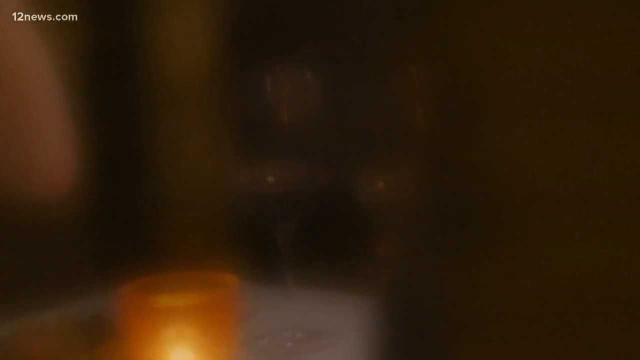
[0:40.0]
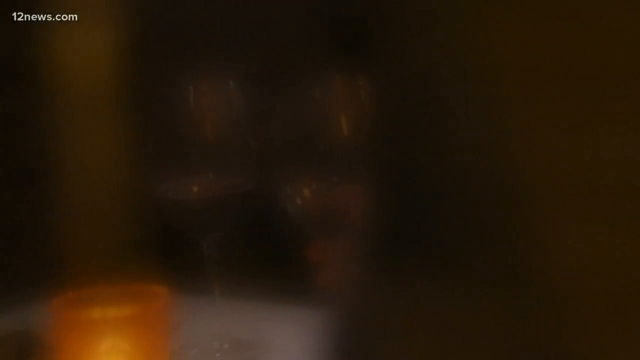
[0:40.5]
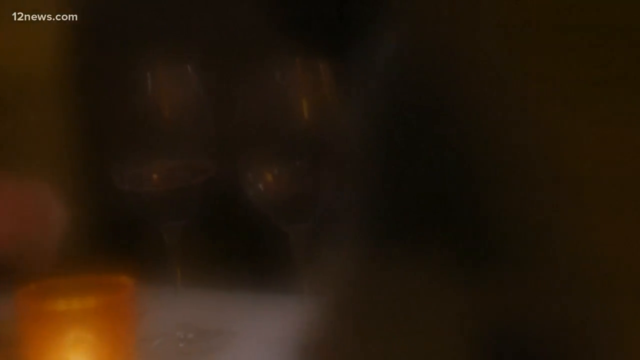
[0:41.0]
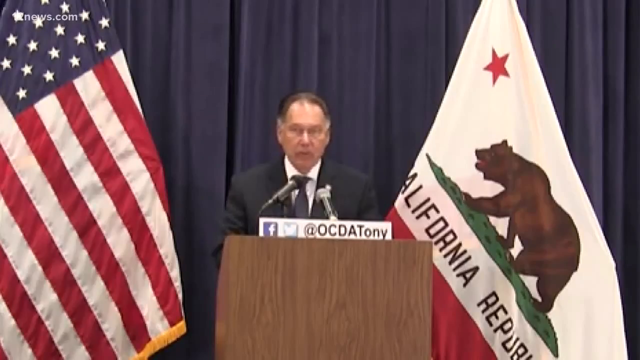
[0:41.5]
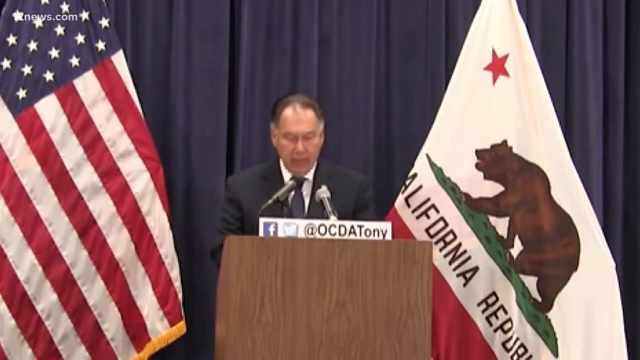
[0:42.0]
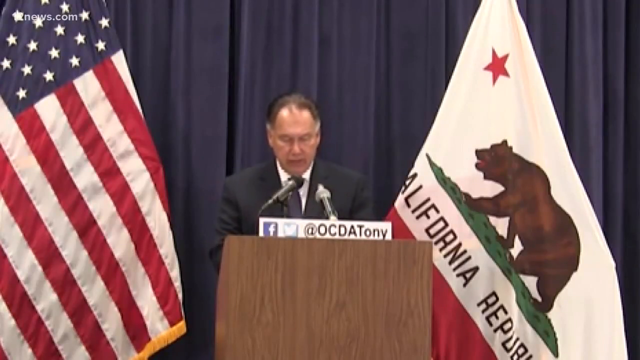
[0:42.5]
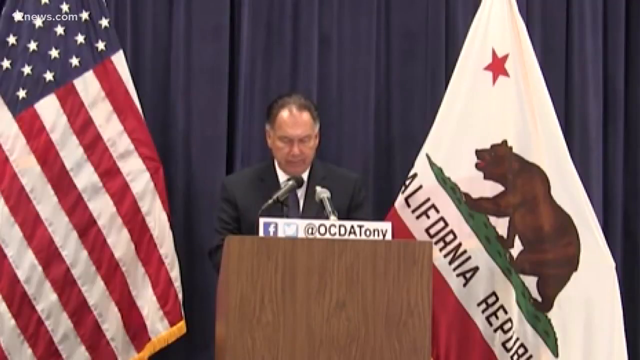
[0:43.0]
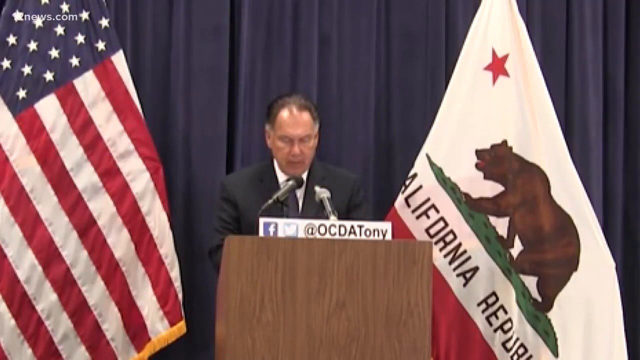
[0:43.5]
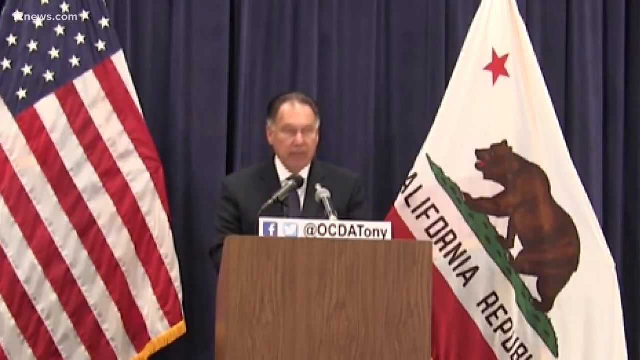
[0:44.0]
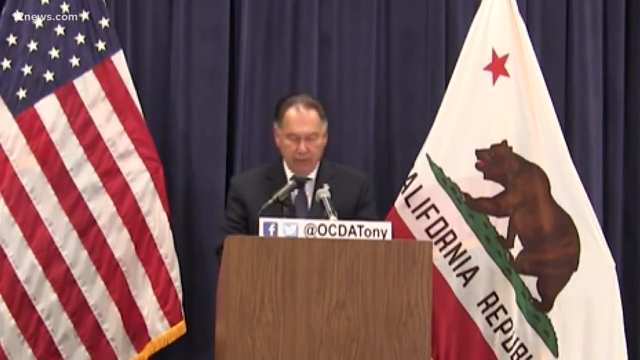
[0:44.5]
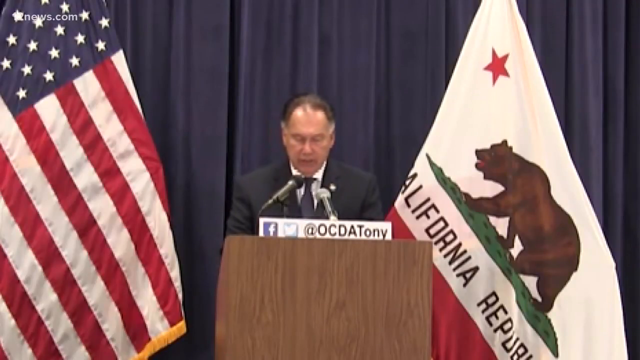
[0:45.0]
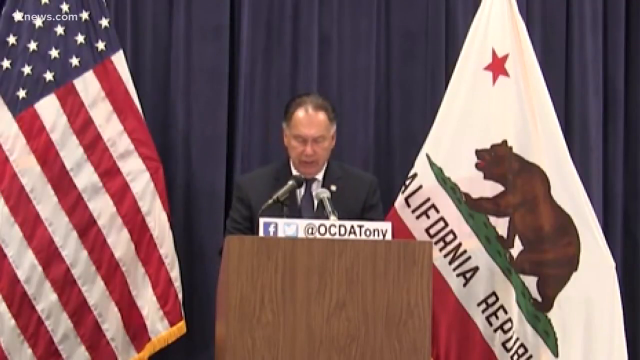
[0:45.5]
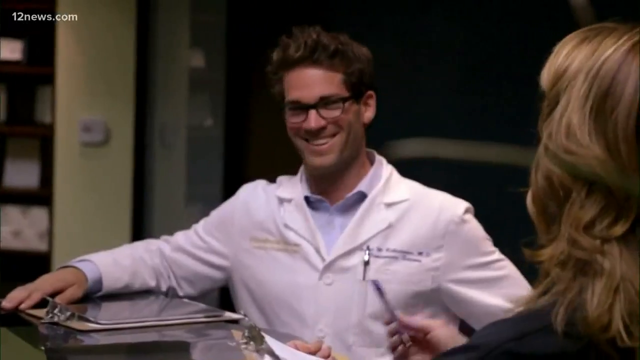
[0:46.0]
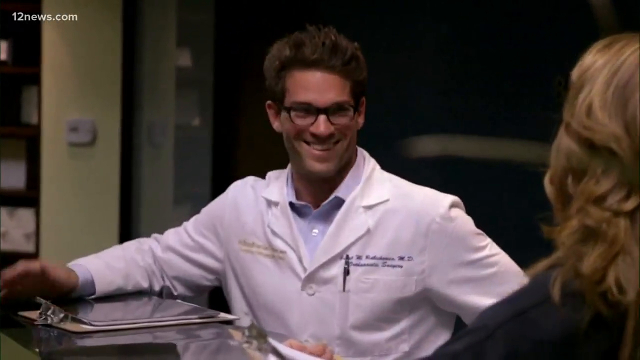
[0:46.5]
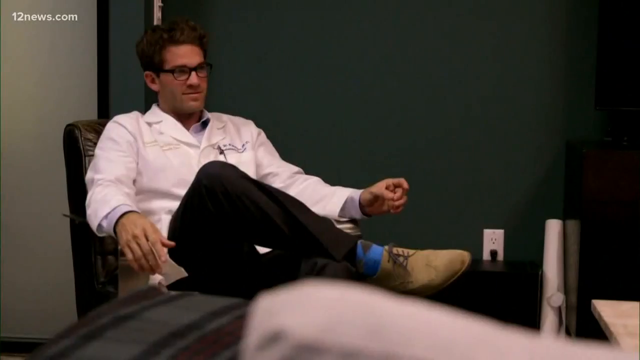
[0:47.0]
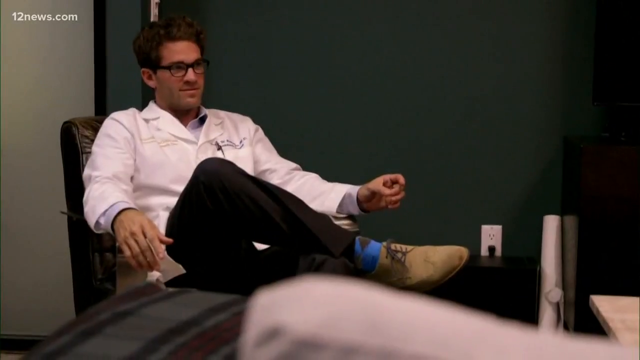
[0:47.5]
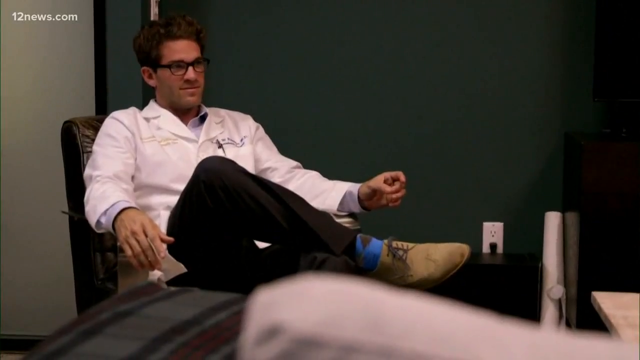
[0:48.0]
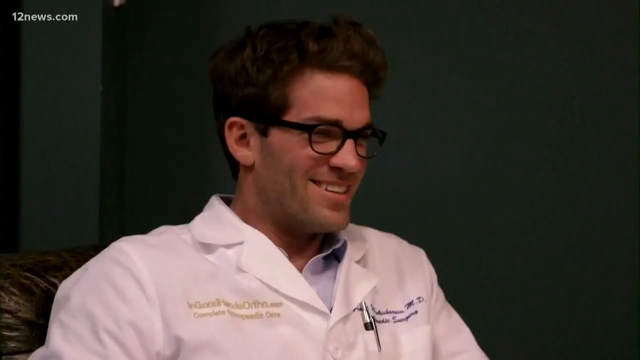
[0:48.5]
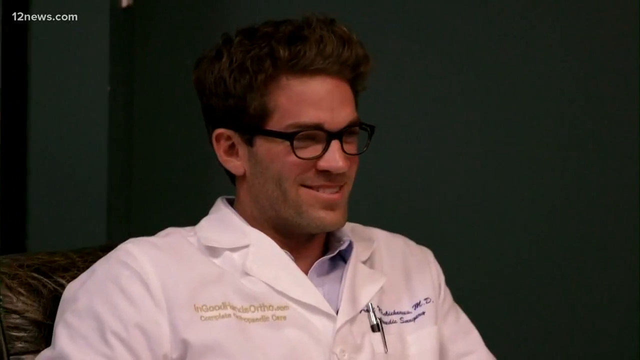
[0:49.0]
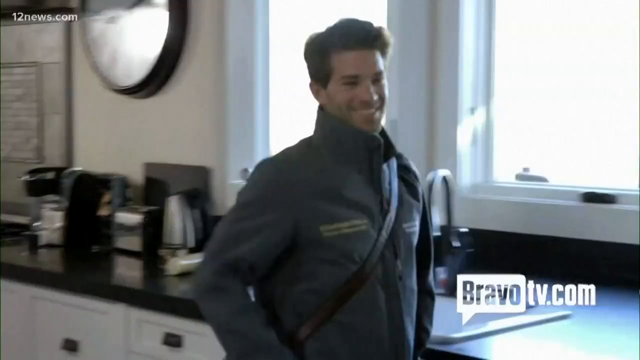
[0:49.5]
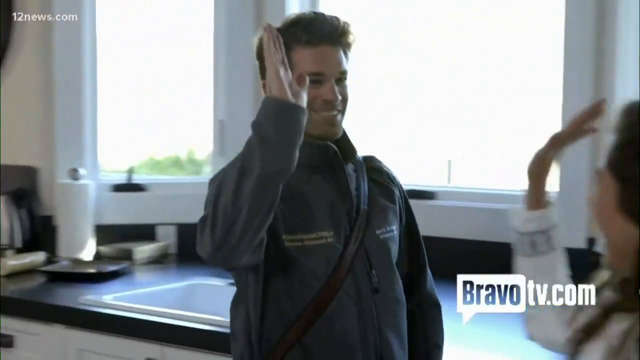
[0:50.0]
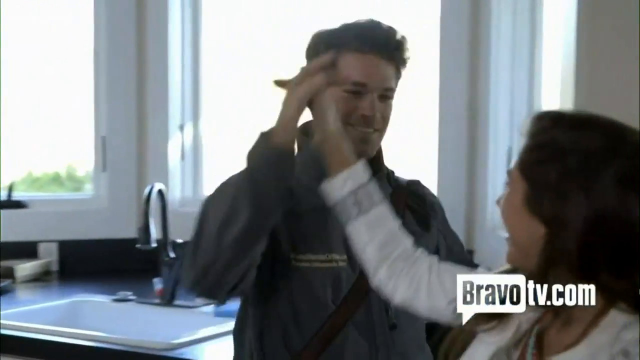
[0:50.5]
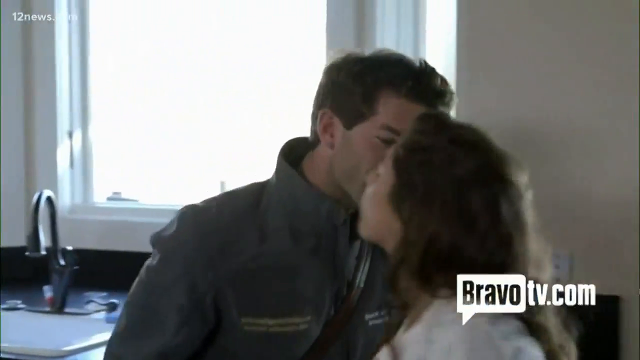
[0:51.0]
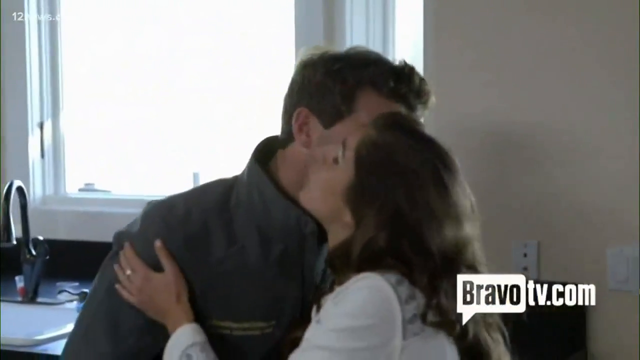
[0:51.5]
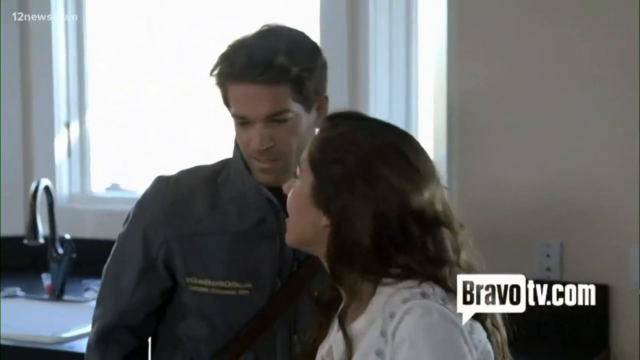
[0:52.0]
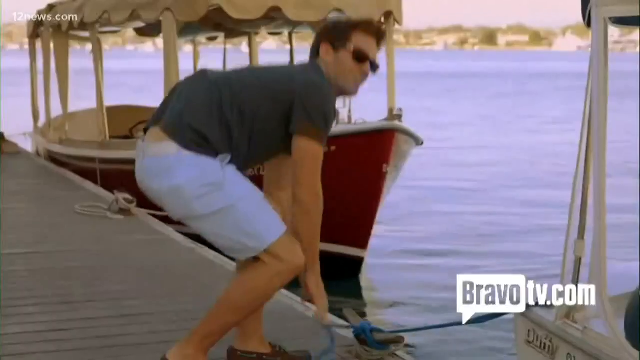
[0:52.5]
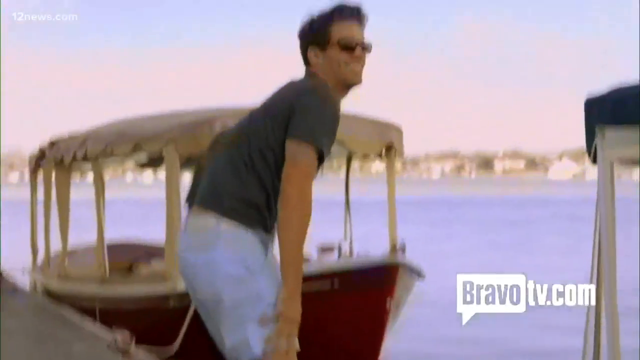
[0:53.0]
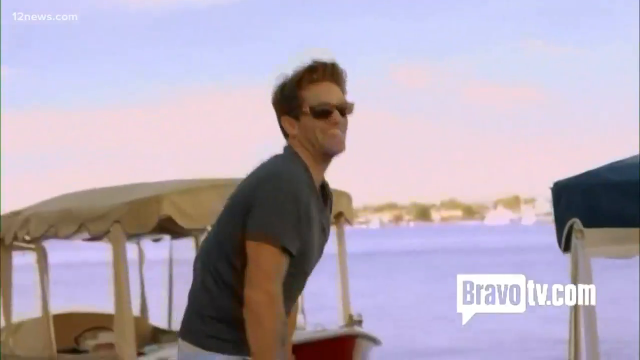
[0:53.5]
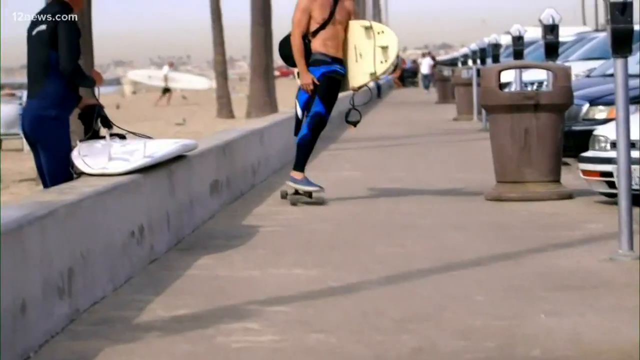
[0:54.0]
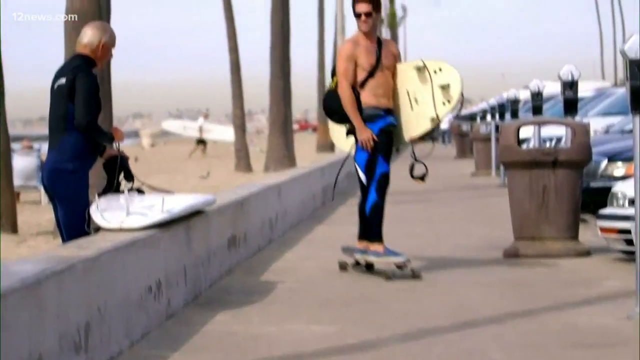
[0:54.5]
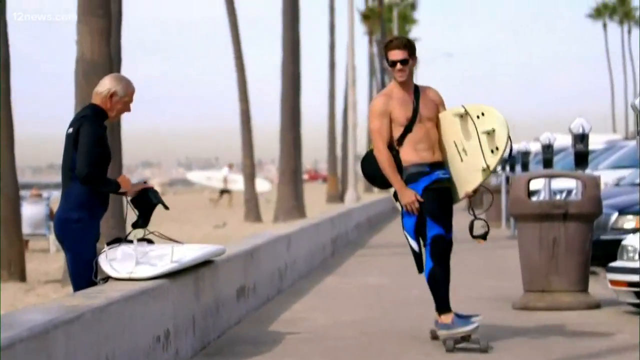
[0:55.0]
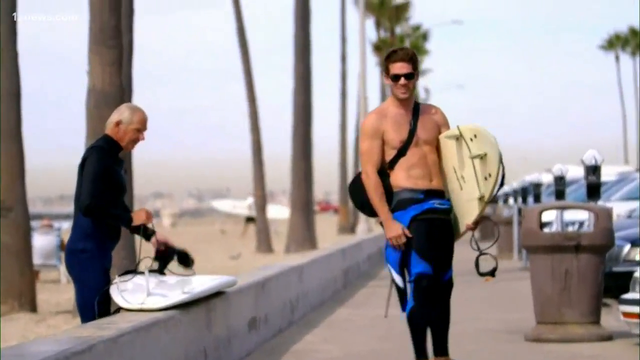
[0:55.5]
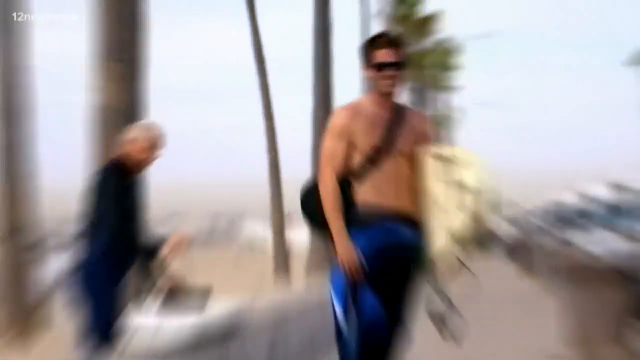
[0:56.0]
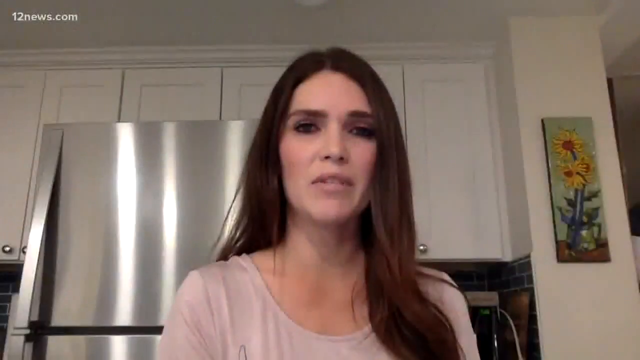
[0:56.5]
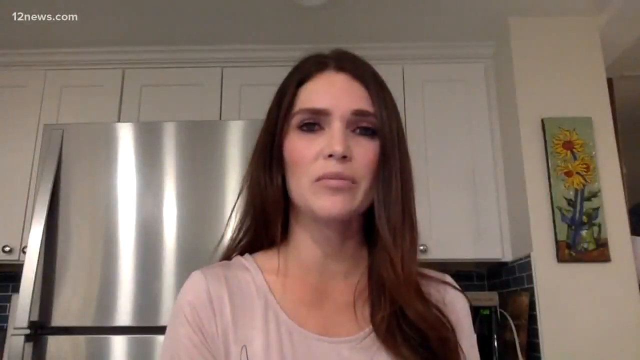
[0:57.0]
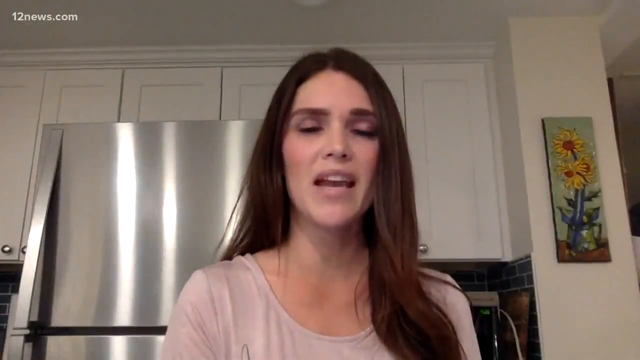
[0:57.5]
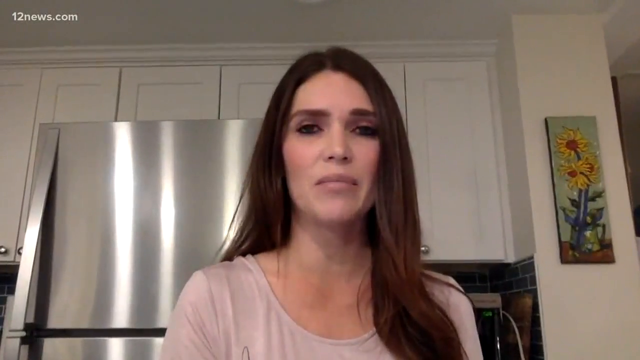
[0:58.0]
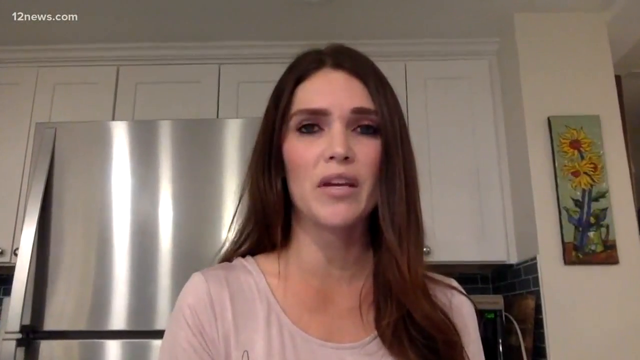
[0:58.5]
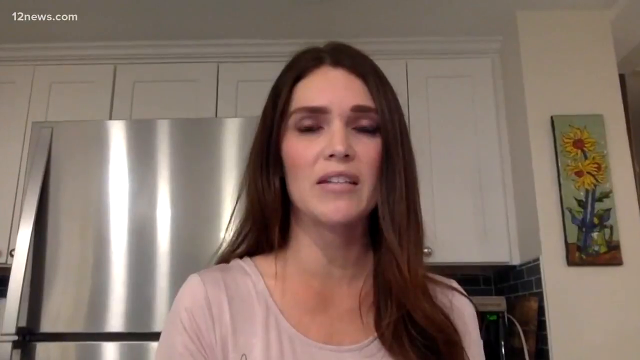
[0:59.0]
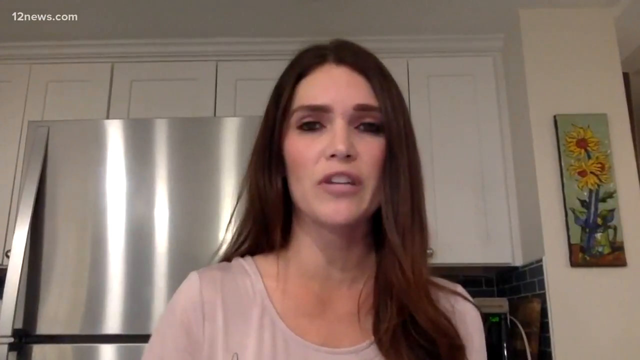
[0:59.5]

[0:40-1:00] A man who could be a senator or governor stands in front of a podium with microphones, speaking to the camera. An American flag is on the left side, along with a white flag with a bear that says "California", possibly "California Republic". The curtains behind are blue. The man wears a very dark greenish suit and a white shirt. A still picture of this man, possibly part of the mug shot, shows him in a white shirt over a purple, light blue shirt, wearing dark green sunglasses or just glasses. Another view of him in the dark green glasses shows a brown shoe and blue socks; the wall is very green, and the door behind it looks light green with black trim. Footage shows the man and a girl in what looks like a kitchen, with a sink in the background and white window trim; the woman, in a white outfit, gives the man a high five, and they hug and kind of kiss. Footage then shows the man on a boat, kind of like at a beach, with a boat, water, balloons in the distance, bluish skies and little clouds. He apparently goes down the beach skateboarding, with palm trees visible. Then there is footage of the woman from the mug shot, with reddish hair in this picture, wearing a white pinkish little top, with a silver icebox and white cabinets in the back and a picture that looks like sunflowers on the wall to the right.